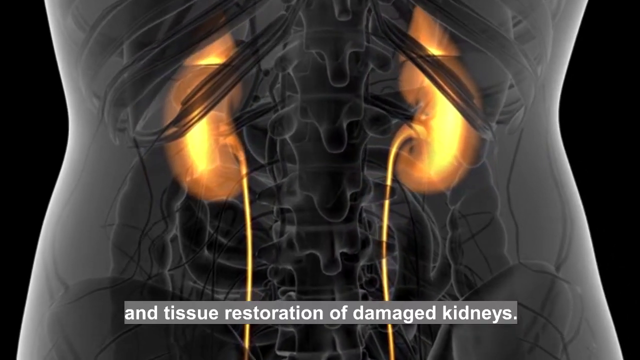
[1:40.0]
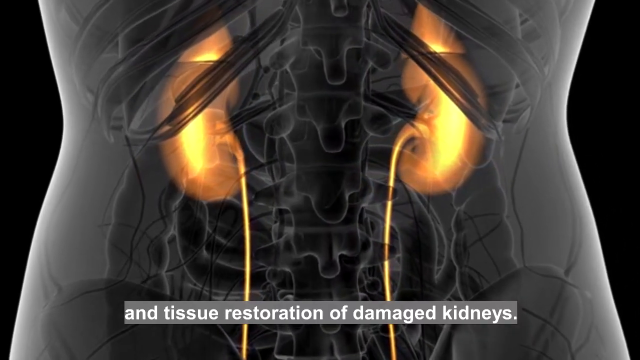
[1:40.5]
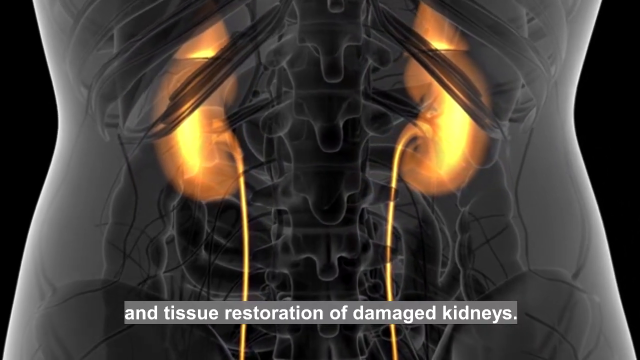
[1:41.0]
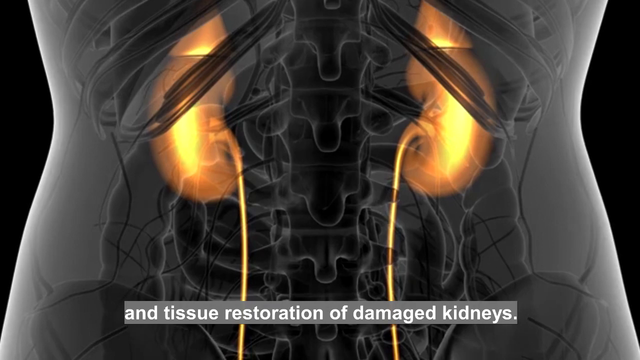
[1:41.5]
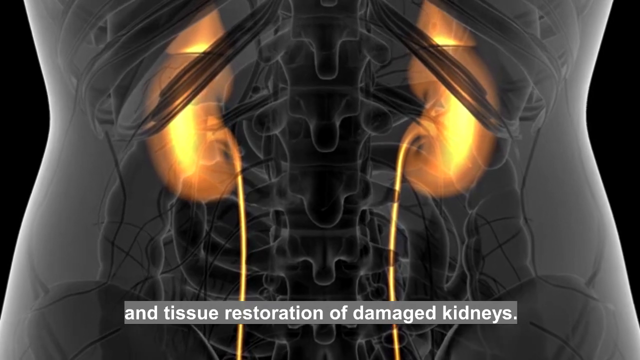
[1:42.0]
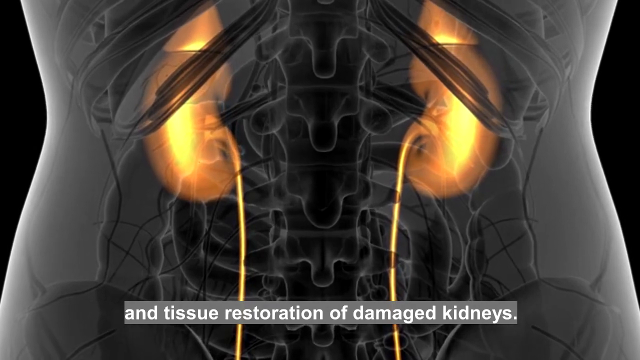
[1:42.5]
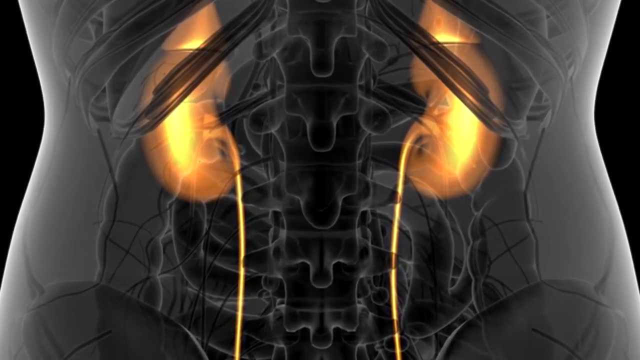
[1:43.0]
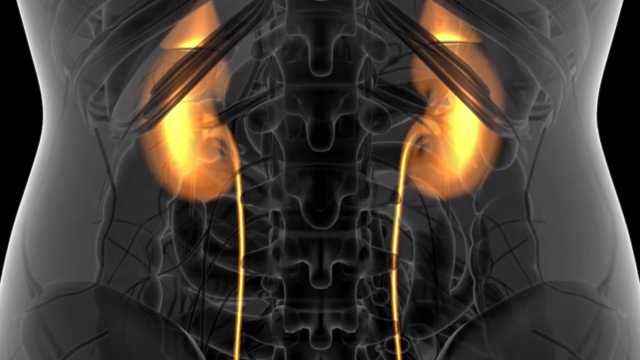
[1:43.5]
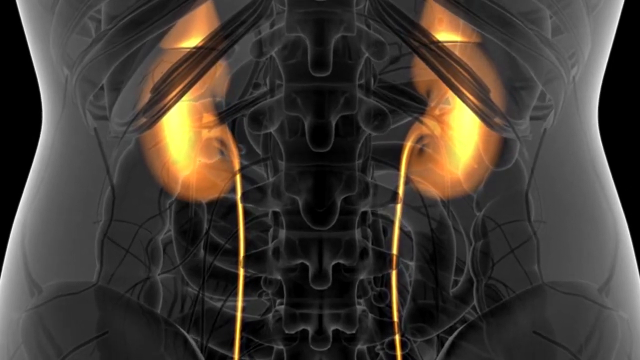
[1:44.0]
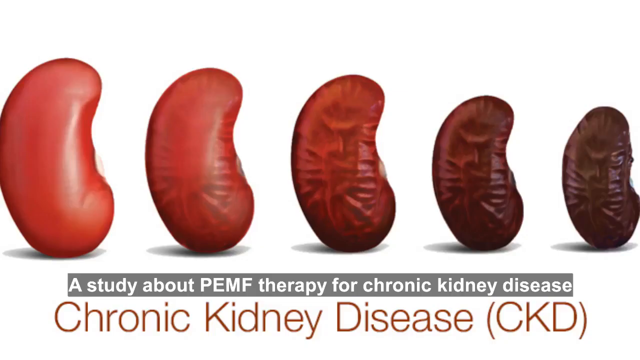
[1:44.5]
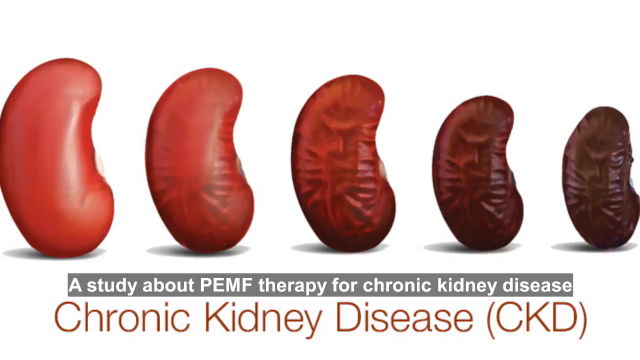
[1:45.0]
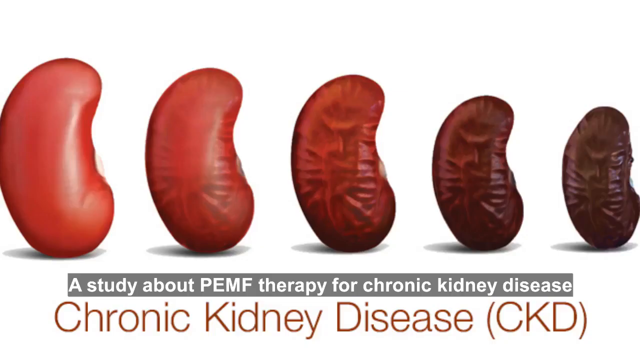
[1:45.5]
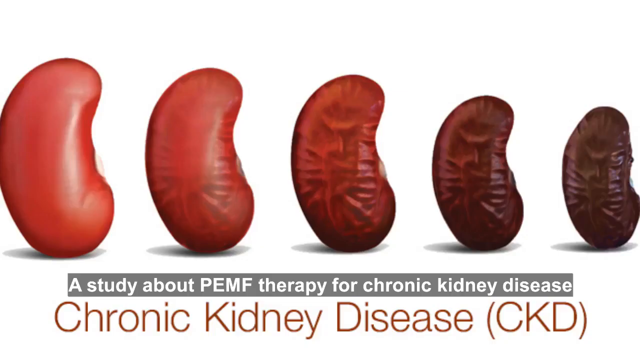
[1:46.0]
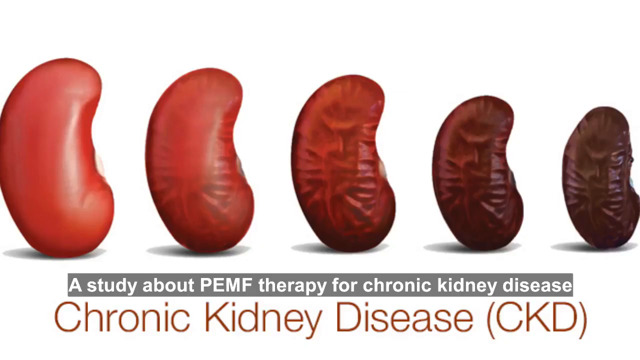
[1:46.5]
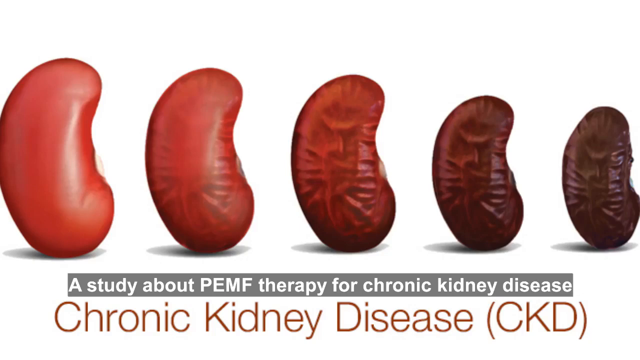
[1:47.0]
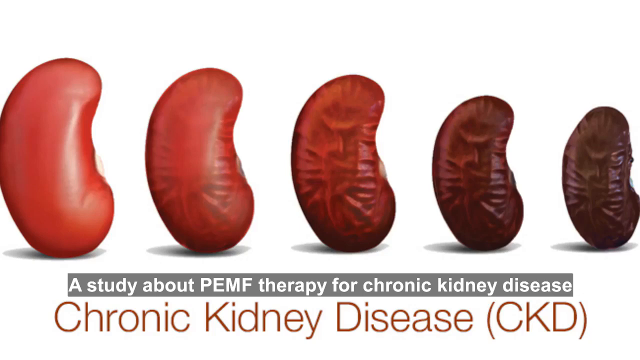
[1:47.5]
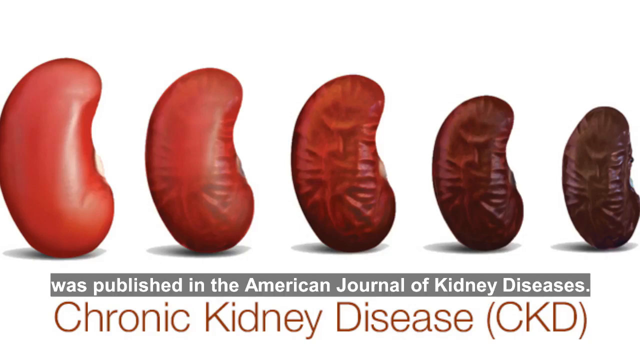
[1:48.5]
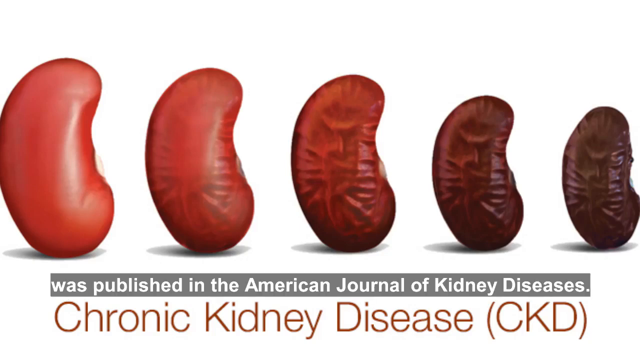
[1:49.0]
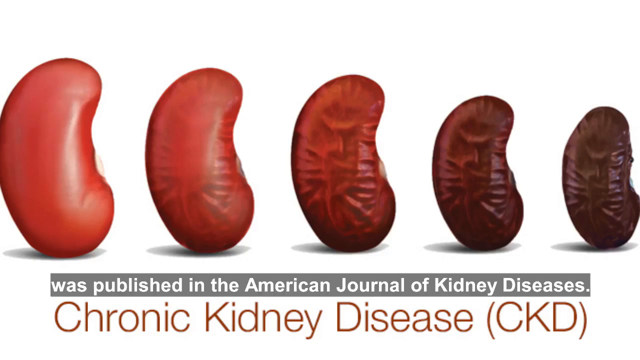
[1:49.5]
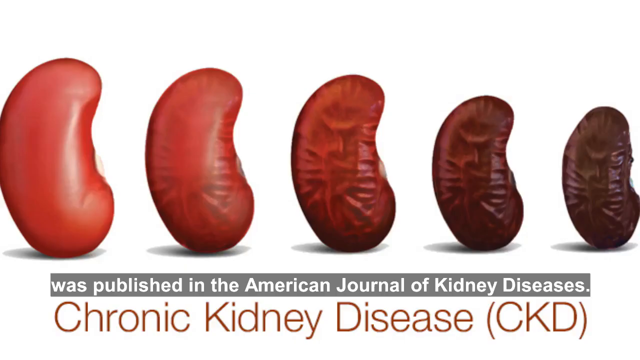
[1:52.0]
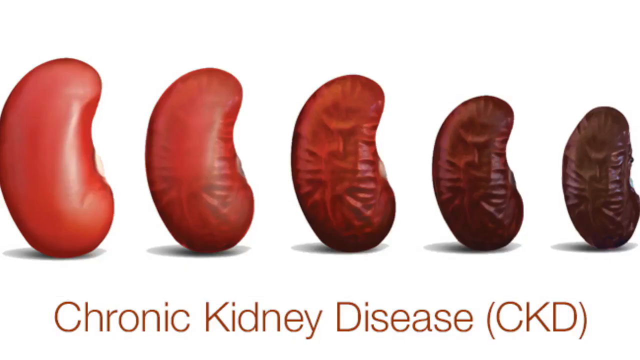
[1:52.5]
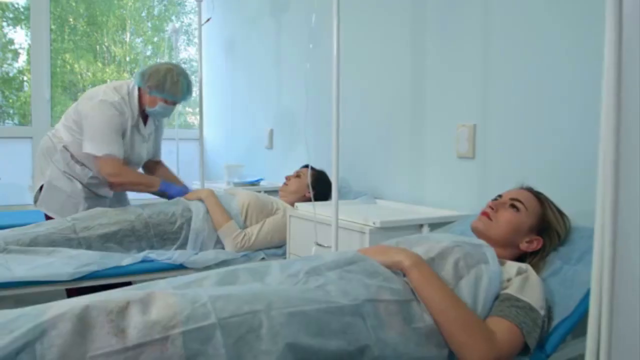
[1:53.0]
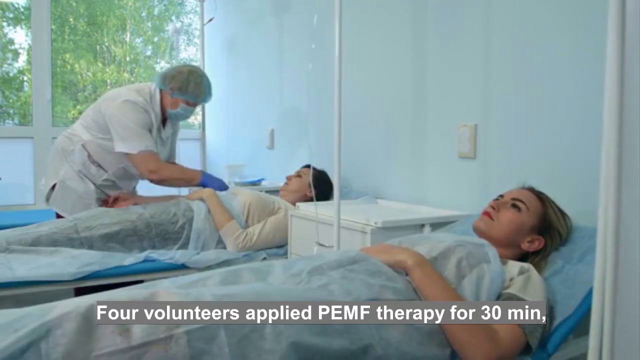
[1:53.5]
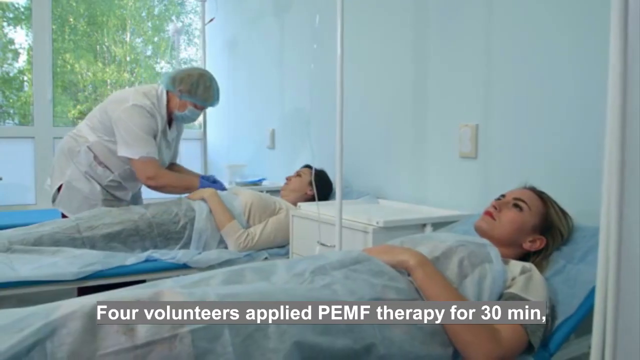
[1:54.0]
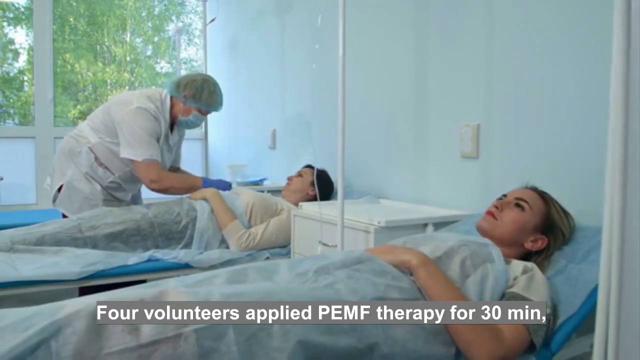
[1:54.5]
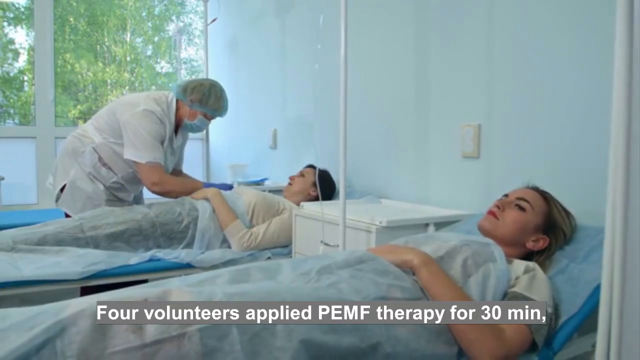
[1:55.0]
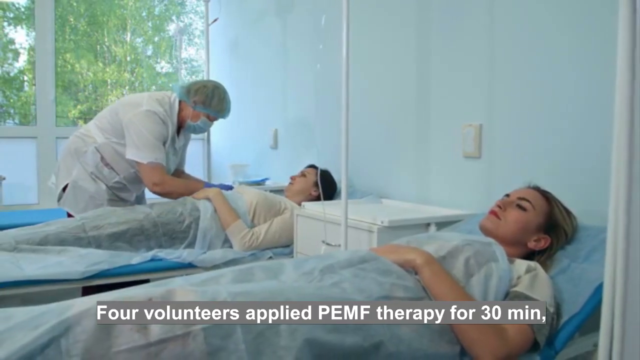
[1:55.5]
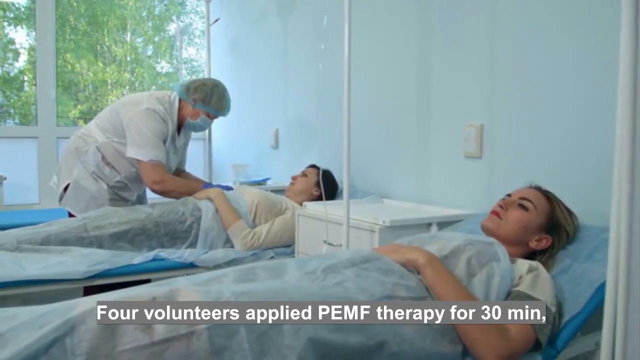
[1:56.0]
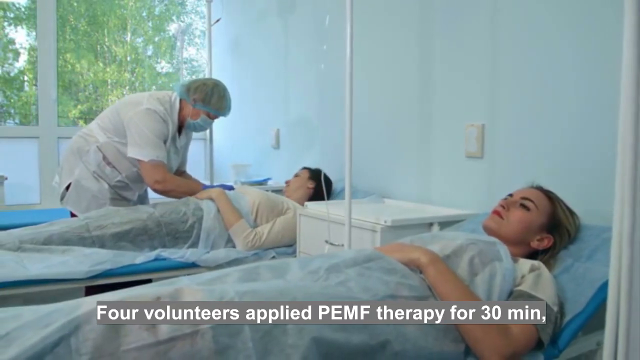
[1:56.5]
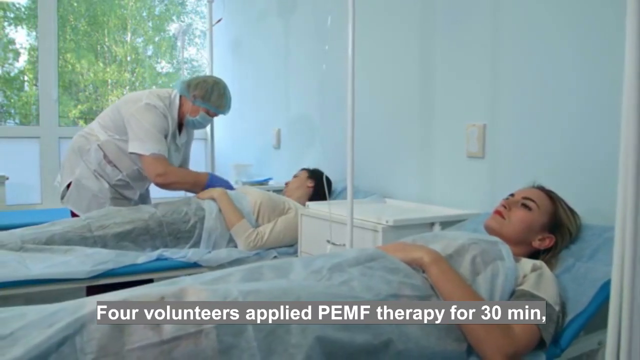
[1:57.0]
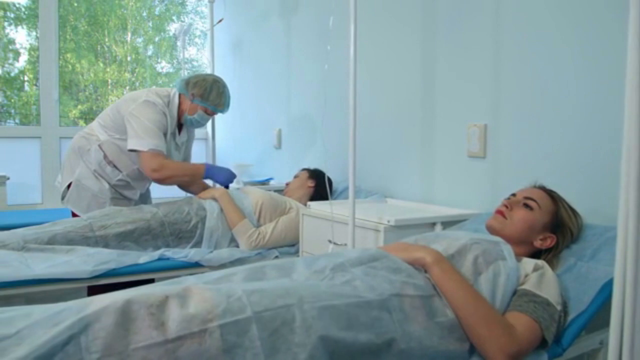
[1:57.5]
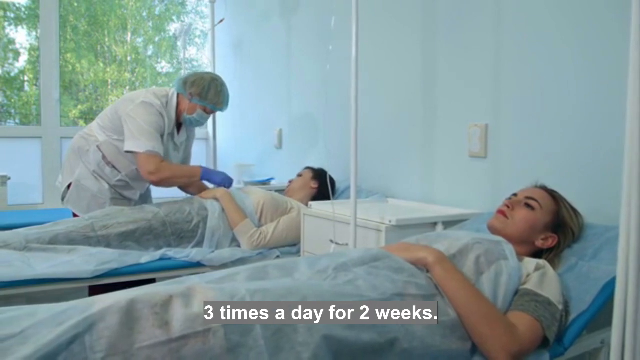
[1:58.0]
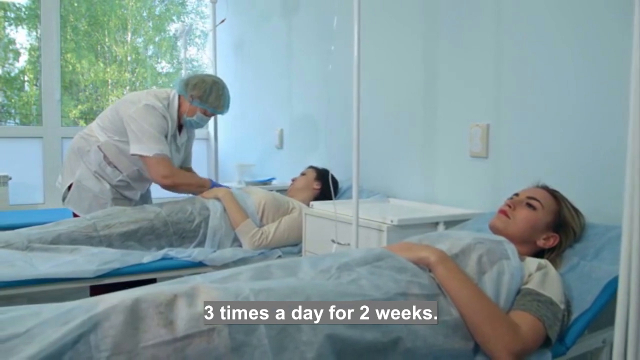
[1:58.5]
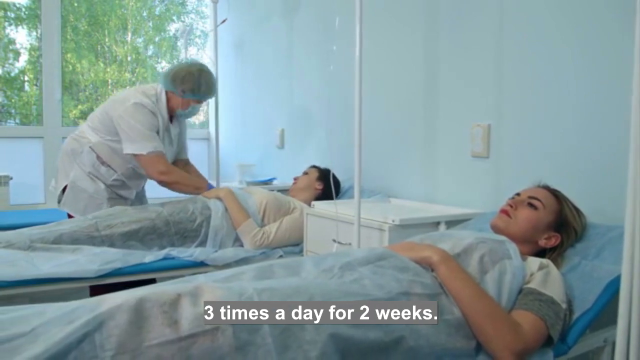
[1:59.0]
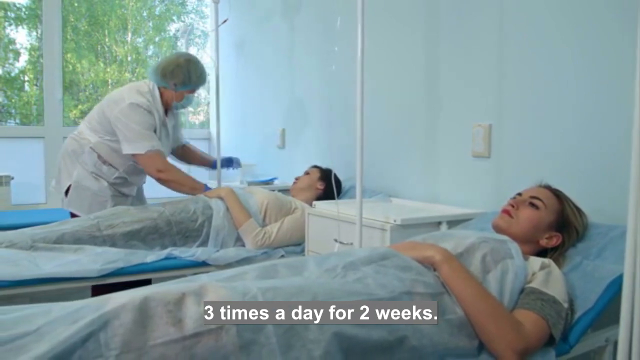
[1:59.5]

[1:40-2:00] The view keeps zooming in on the kidneys, getting very close to the gray body with its visible bone structure and black on either side, with text at the bottom reading "tissue restoration of damaged kidneys". The video cuts to a chart of kidneys, apparently healthy on the left and becoming more damaged toward the right, pinkish on the left and dark red on the right, labeled "chronic kidney disease or CKD". Gray text reads "a study about PEMF therapy for chronic kidney disease was published in the American Journal of Kidney Diseases." The video then cuts to two women in what is possibly some type of lab, while a person in the background in scrubs and a face mask hooks them up to something. Text reads "four volunteers applied PEMF therapy for 30 minutes, three times a day for two weeks".